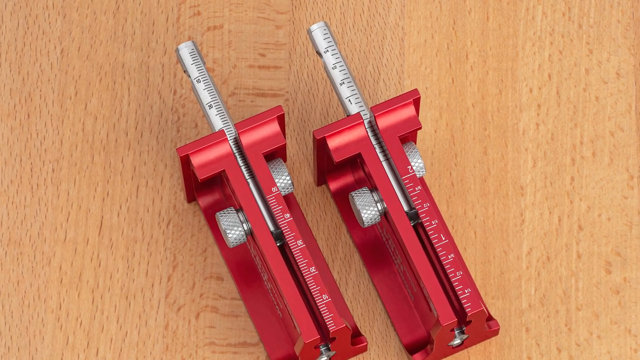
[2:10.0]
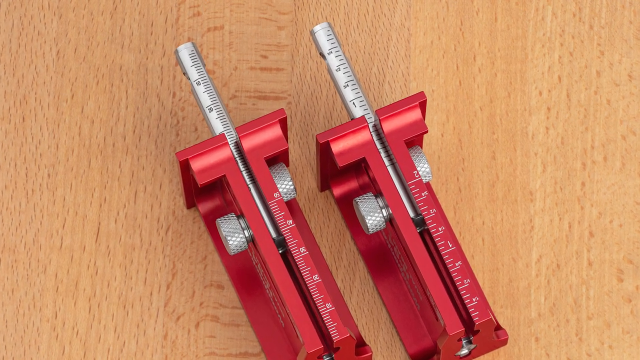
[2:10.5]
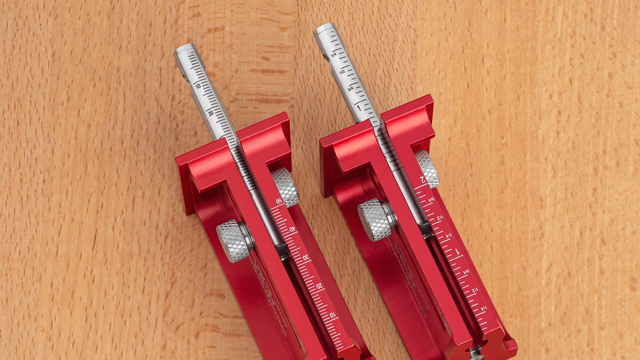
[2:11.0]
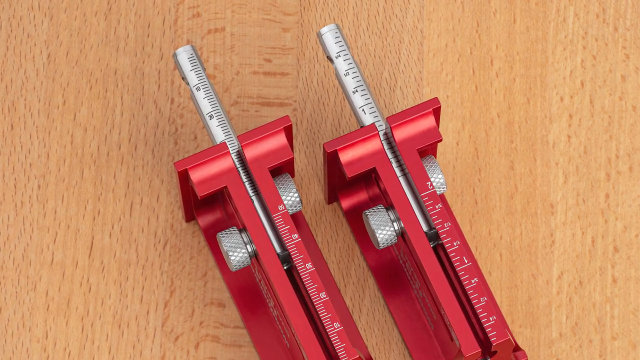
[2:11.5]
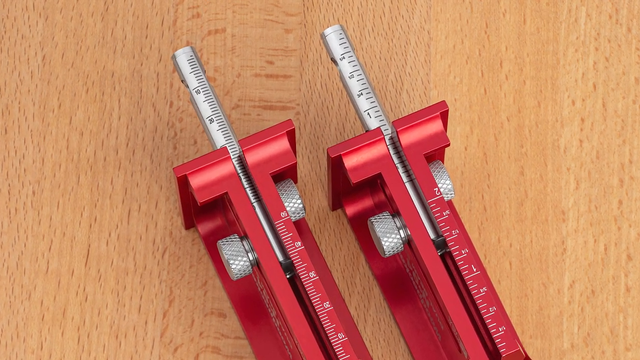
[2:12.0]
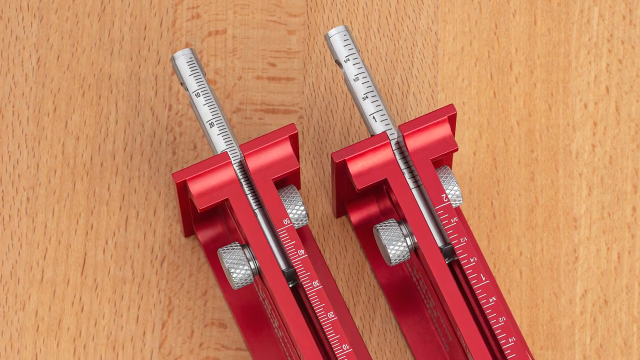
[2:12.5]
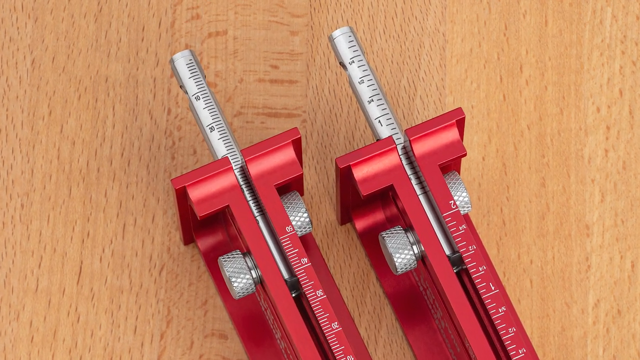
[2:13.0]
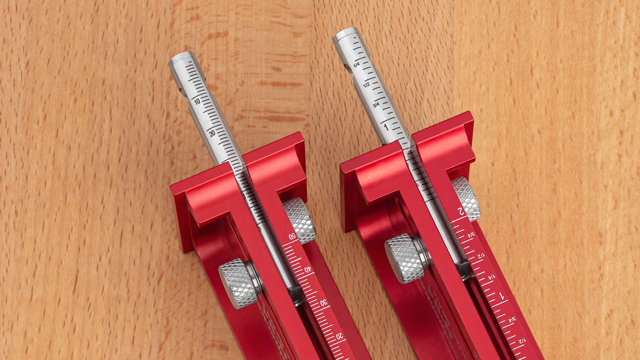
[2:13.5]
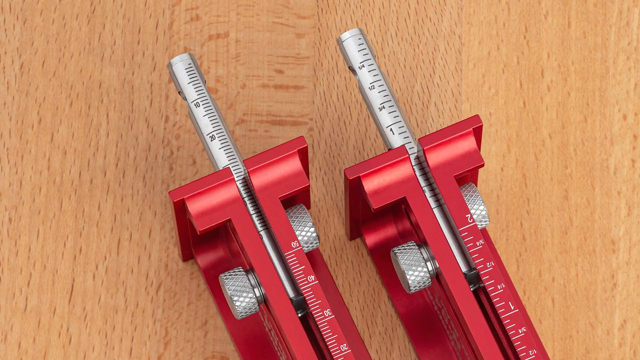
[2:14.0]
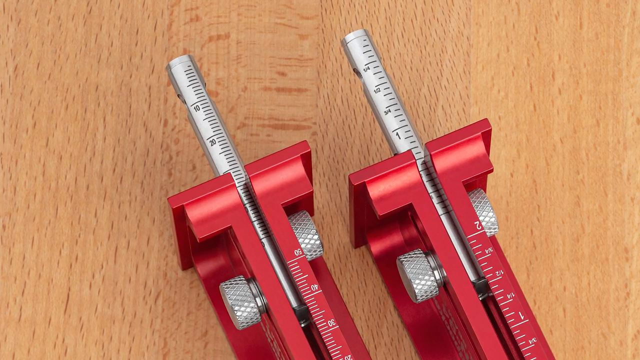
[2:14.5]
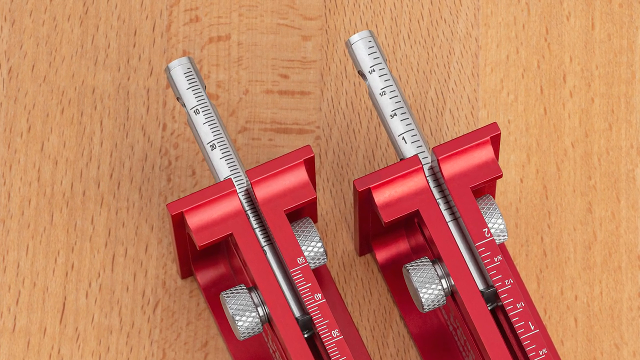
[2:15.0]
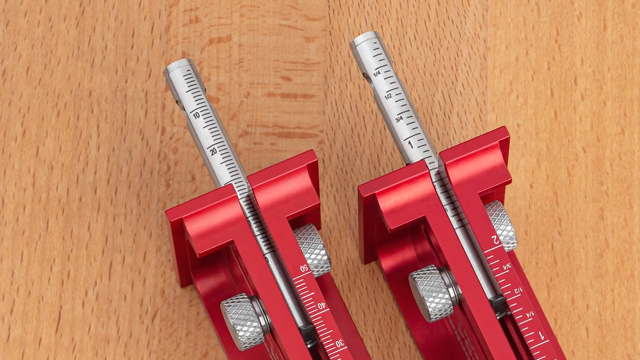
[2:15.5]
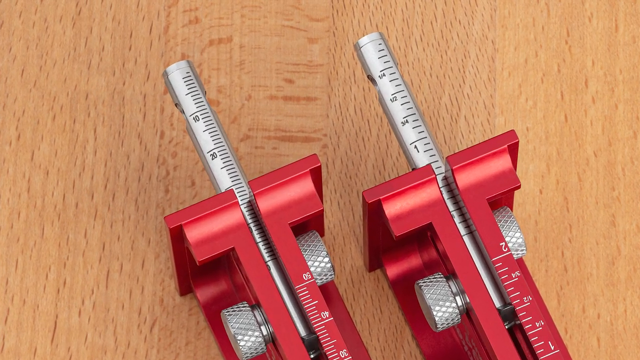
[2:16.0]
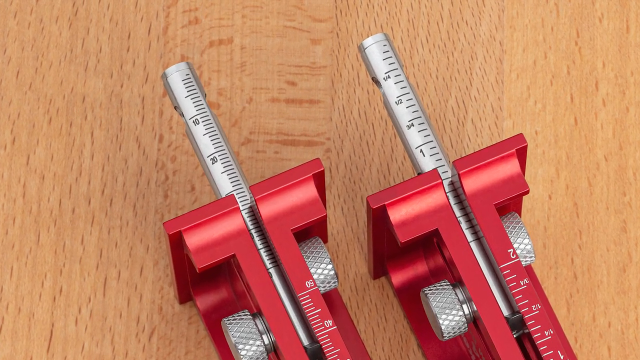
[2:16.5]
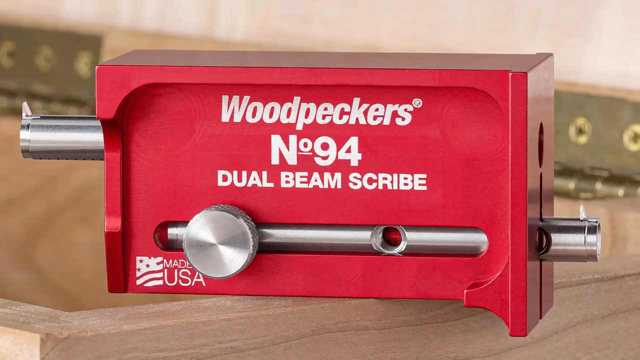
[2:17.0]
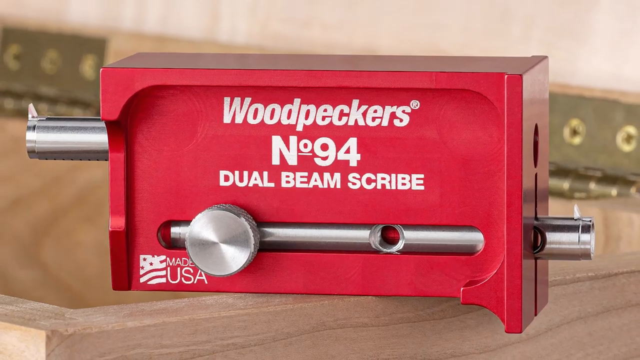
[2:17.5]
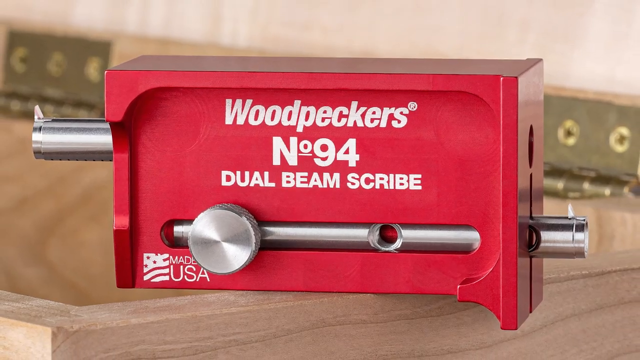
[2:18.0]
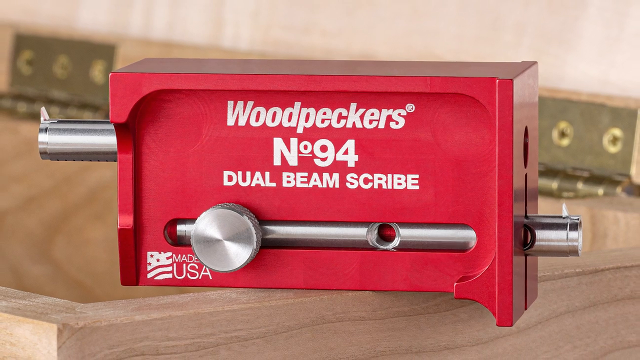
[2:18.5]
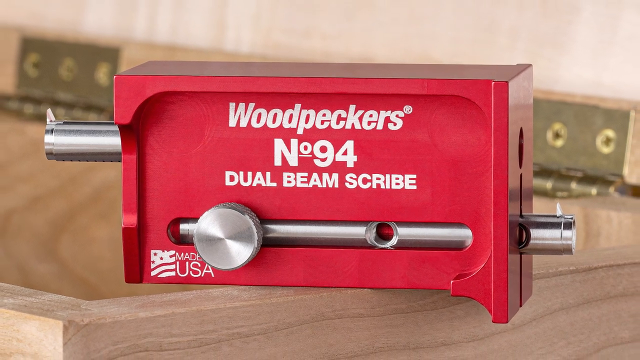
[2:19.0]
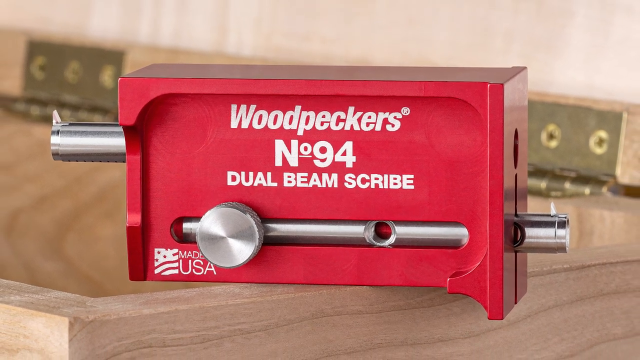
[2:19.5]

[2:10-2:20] Two red tools are out on the workbench, each with numbers on it and with parts that pop out like a little ruler. Both have a twisting piece on each side for tightening. The side of a tool is then shown, reading "Woodpecker's dual beam scribe number 94"; it is unclear whether this is the same tool shown earlier or a different one.